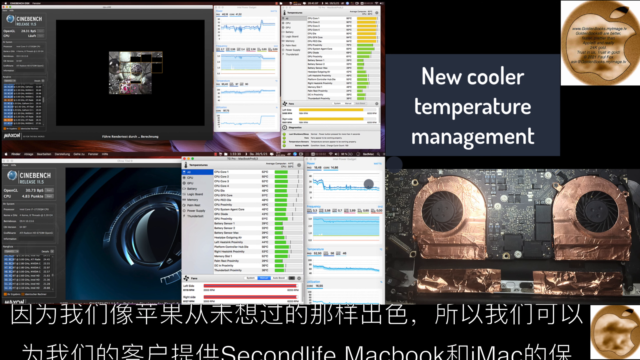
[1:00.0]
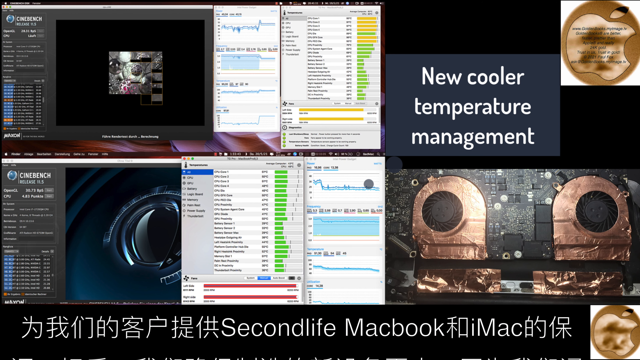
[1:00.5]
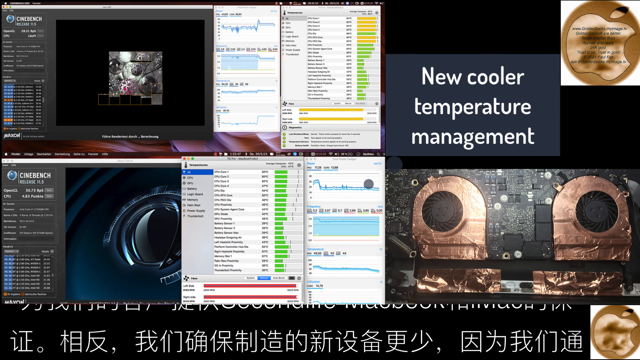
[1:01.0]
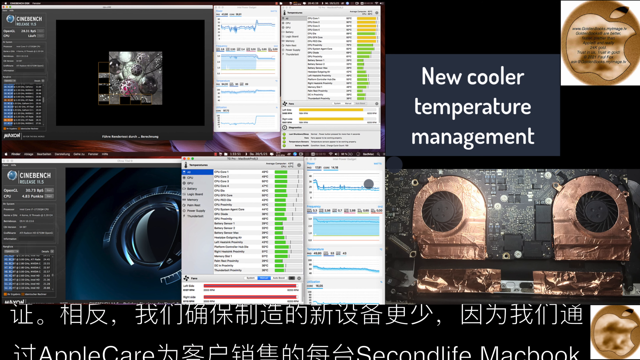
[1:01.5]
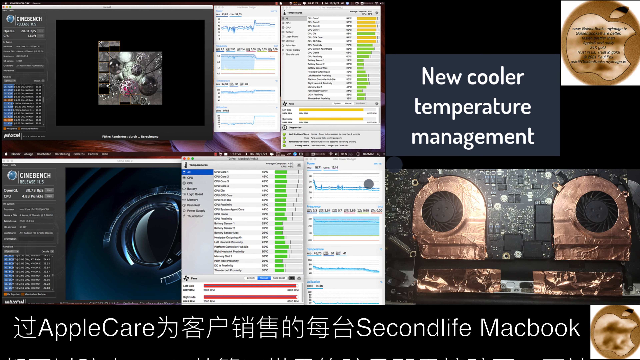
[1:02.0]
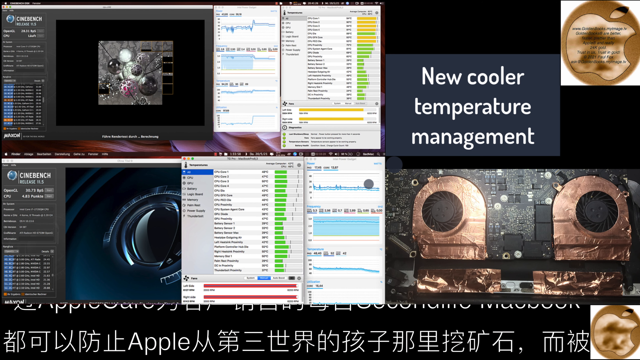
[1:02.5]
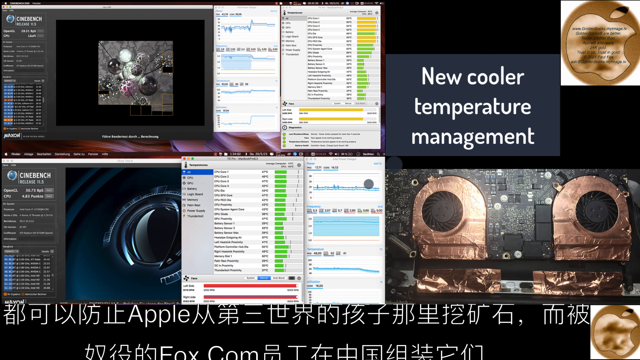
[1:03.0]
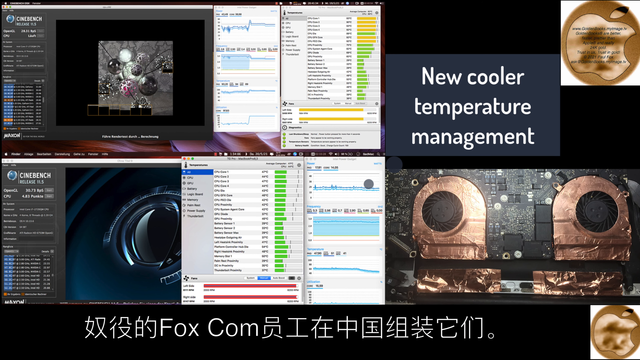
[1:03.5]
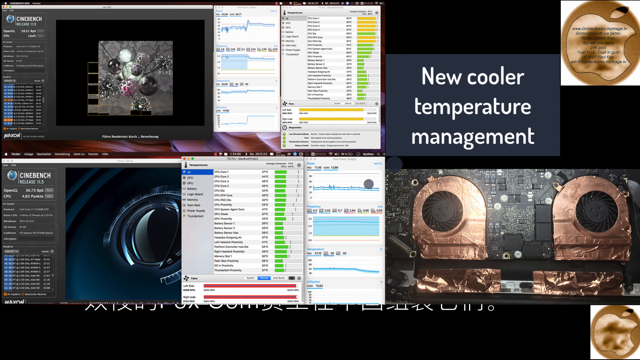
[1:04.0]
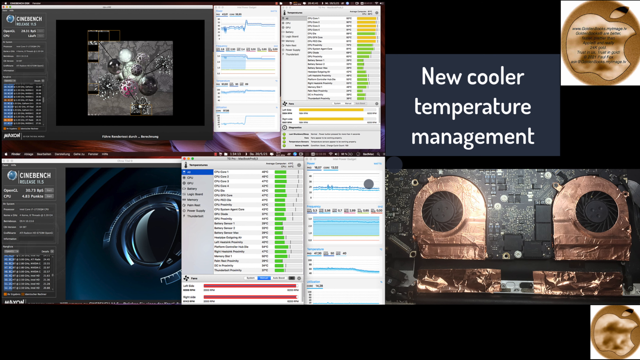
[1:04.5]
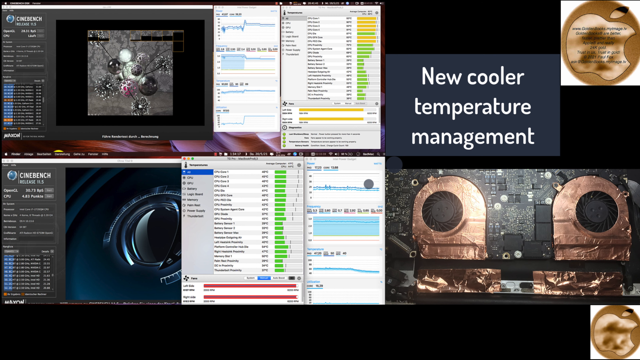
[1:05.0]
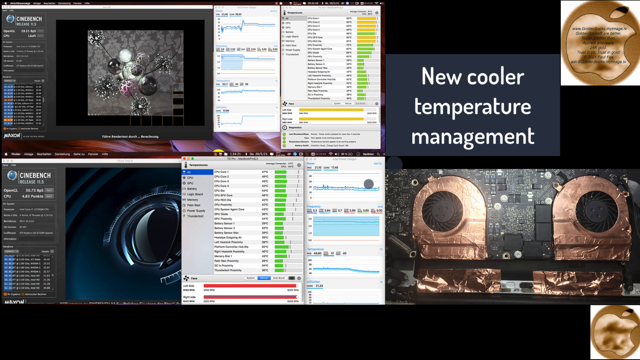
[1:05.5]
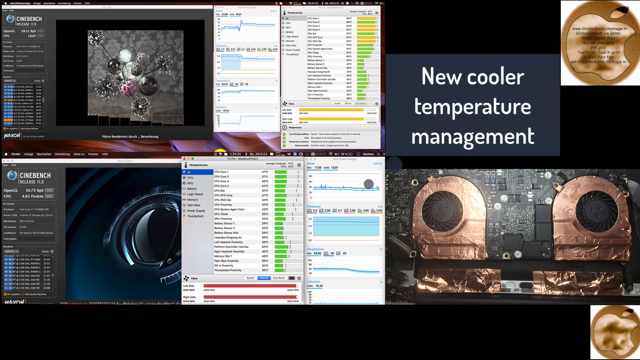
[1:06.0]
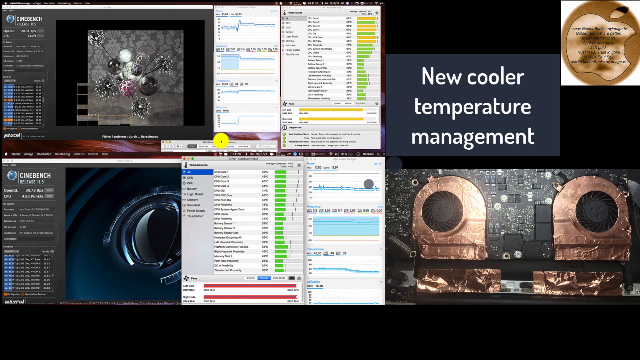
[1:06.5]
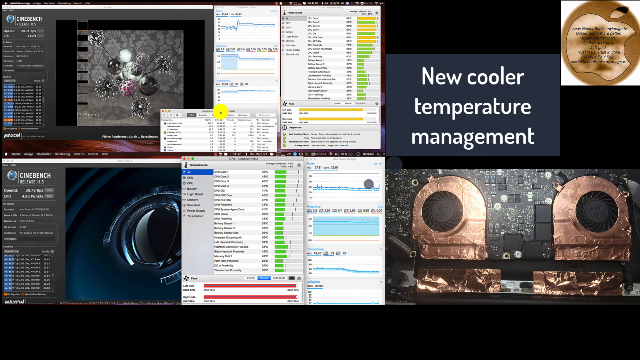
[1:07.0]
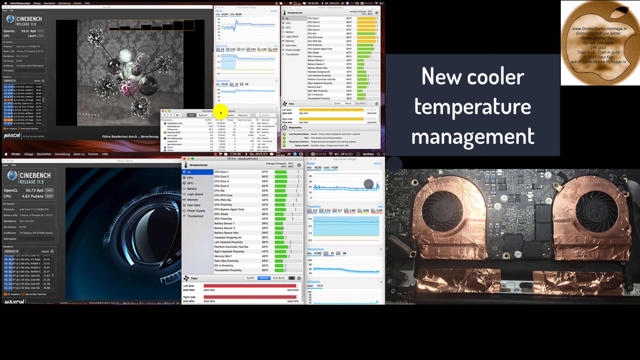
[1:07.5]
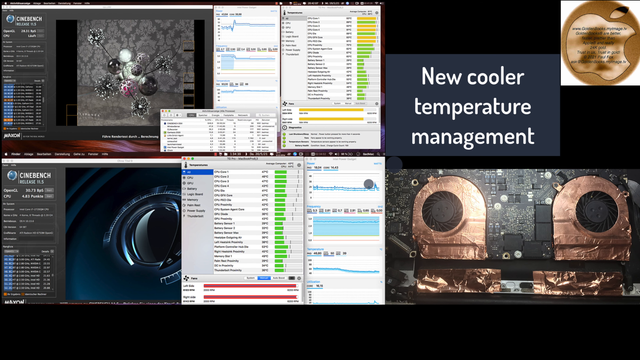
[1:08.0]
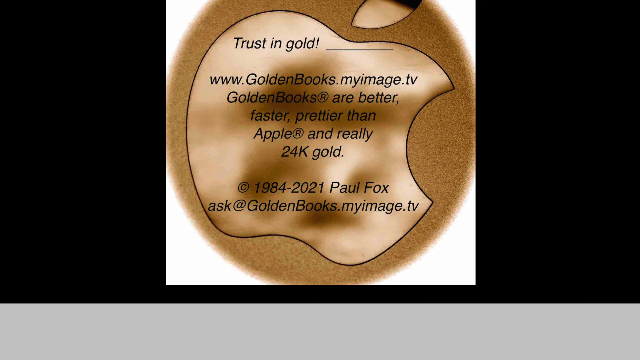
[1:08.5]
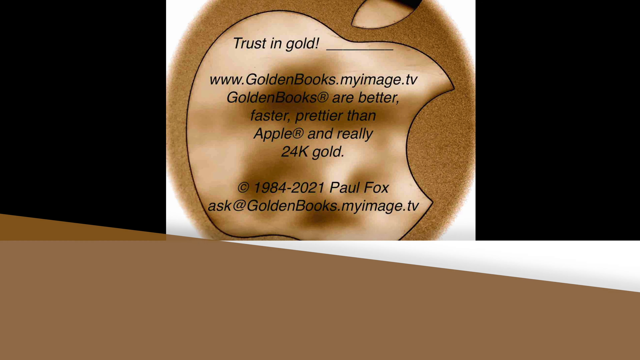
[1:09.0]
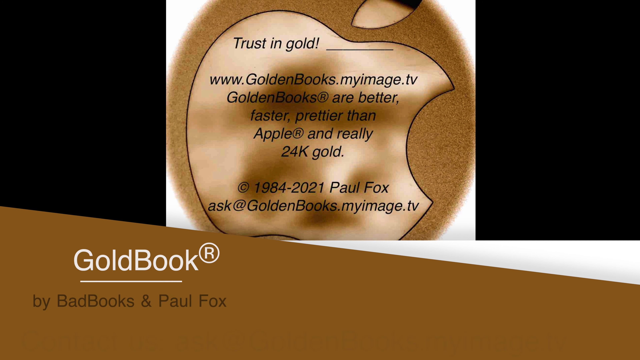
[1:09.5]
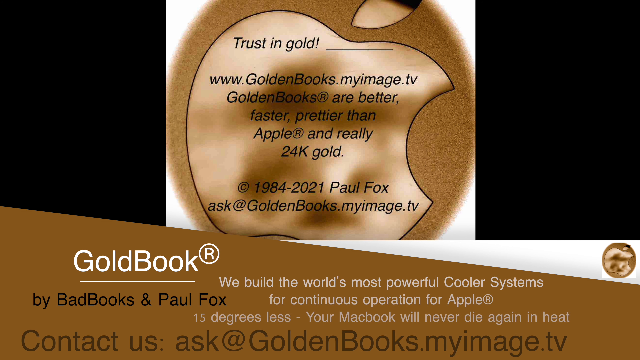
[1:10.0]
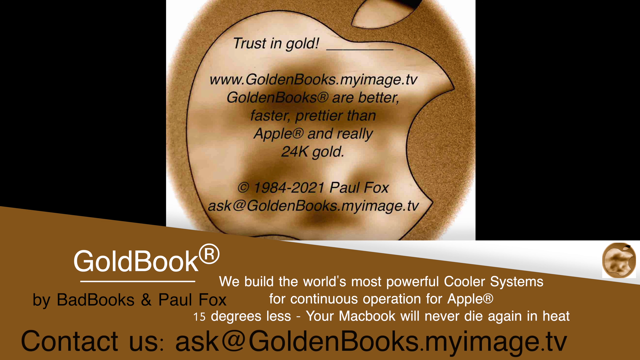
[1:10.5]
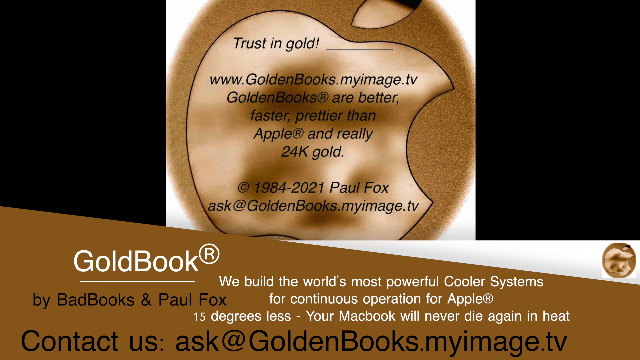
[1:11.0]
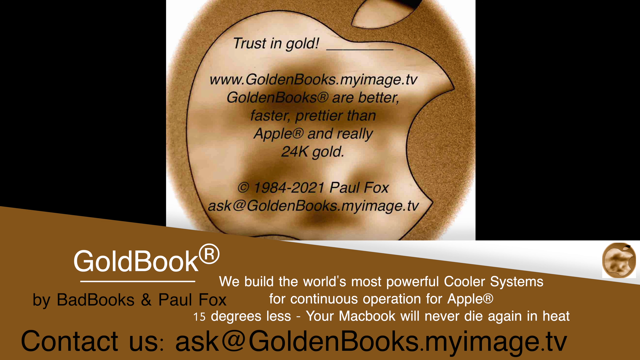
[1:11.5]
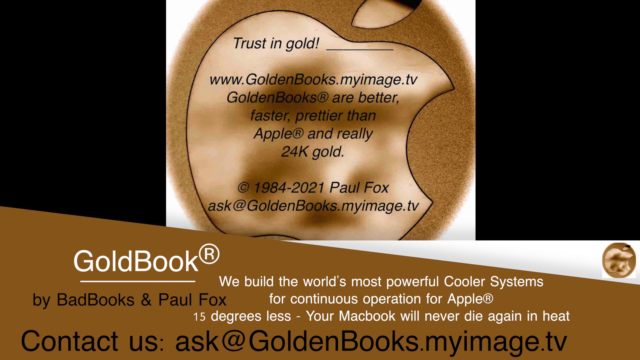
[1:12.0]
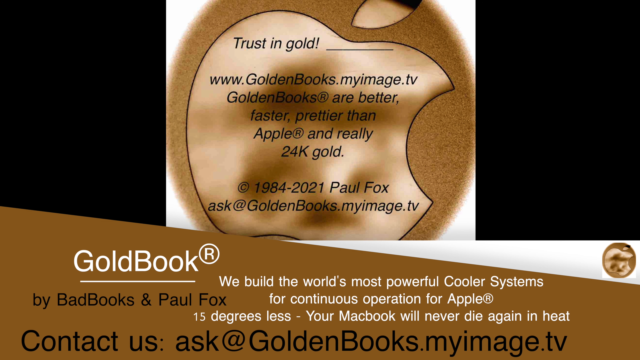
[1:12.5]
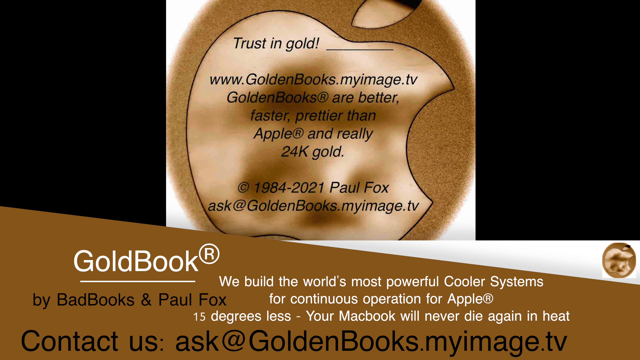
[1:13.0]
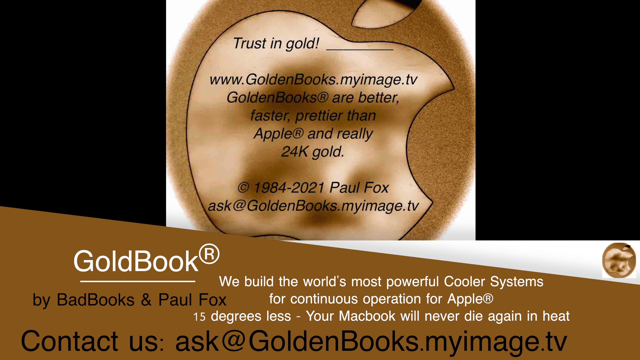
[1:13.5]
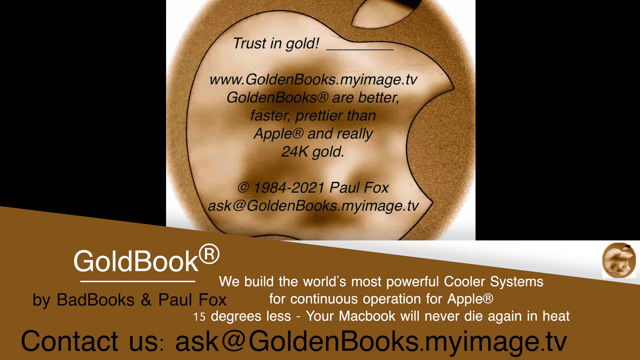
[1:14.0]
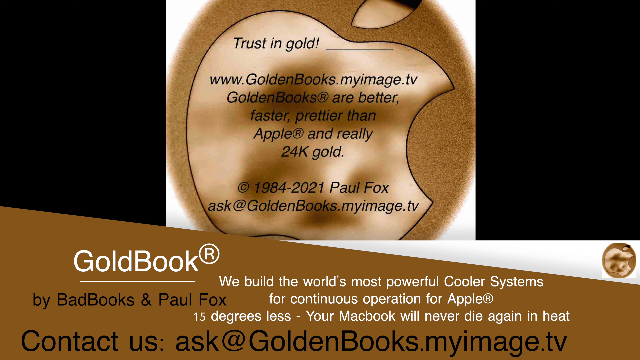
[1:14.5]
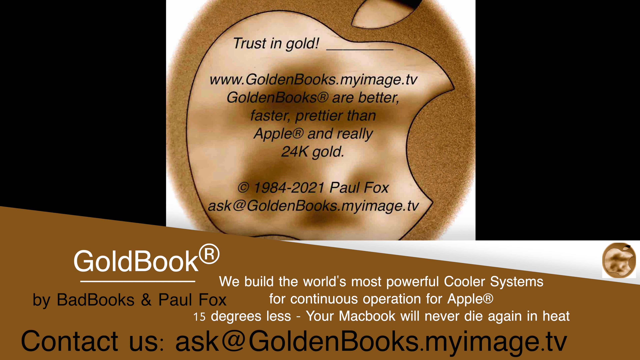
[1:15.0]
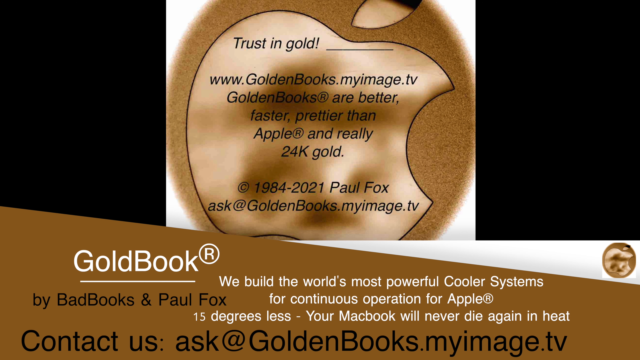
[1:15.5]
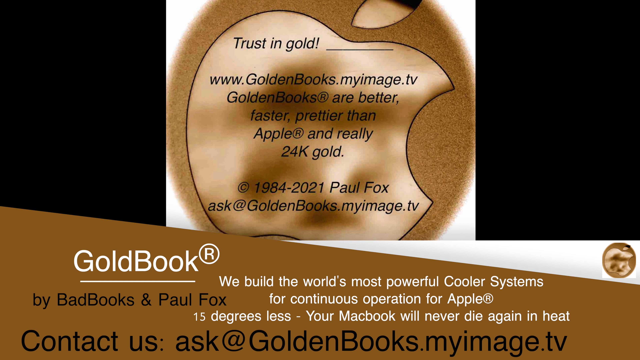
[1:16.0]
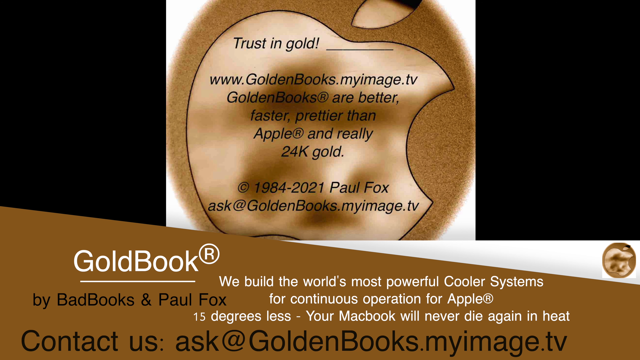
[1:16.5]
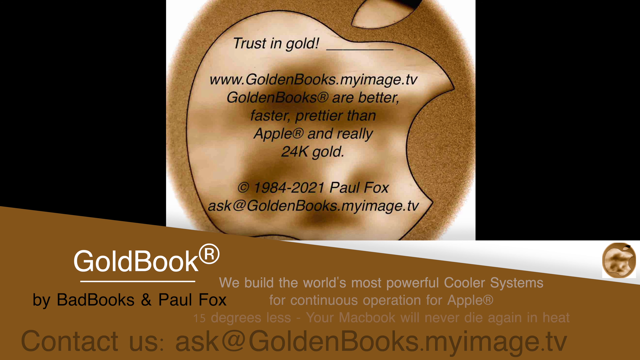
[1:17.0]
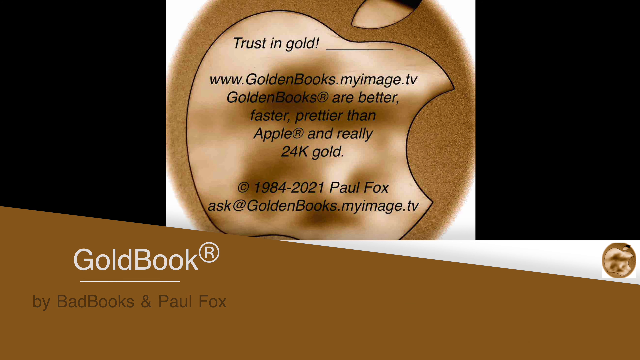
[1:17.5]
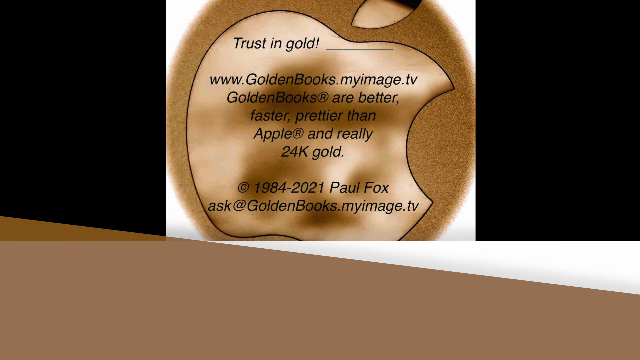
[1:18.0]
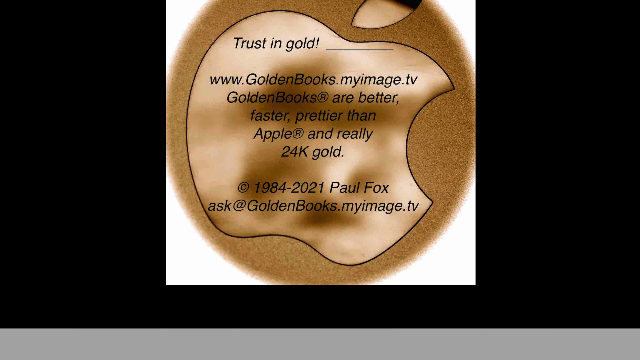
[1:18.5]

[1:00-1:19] The top benchmark returns to the video of an image gradually being filled in with squares in an outward spiral. The bottom benchmark is now a still image of some kind of black and blue disc formation, similar to a speaker but not exactly. The mouse cursor briefly drags a fifth dialogue window, which cannot be read, into the middle of the screen. The view then abruptly switches to the gold apple logo with the words "trust in gold www.goldenbooks.myimage.tv golden books are better, faster, prettier than apple and really 24k gold copyright 1984-2021 Paul Fox ask at goldenbooks.myimage.tv". Below that is a gold bar sloping downward from left to right, bearing white text: "Goldbook We build the world's most powerful cooler systems for continuous operation of Apple 15 degrees less Your MacBook will never die again in heat". In black text underneath the Goldbook name are the words "by Bad Books and Paul Fox", and below that, in black text, is "Contact us ask at goldenbooks.myimage.tv". A white triangle is on top of the gold bar toward the right, and at the very rightmost position is the gold apple logo.